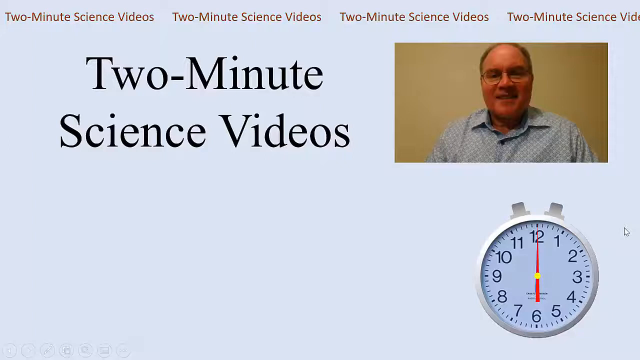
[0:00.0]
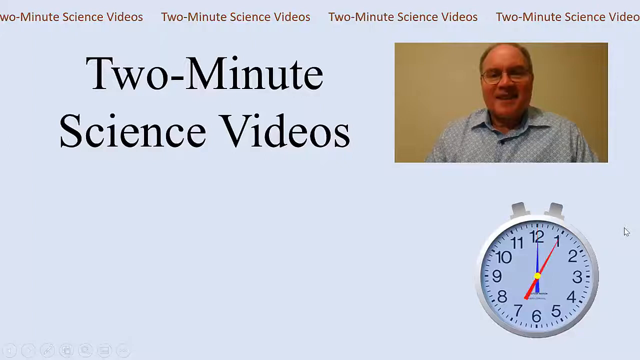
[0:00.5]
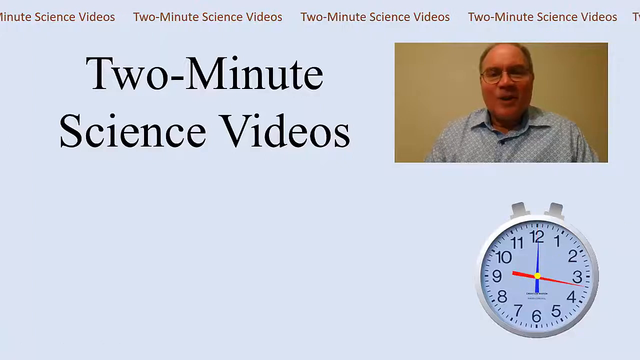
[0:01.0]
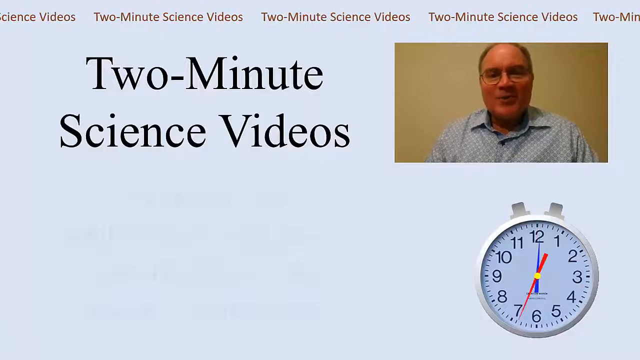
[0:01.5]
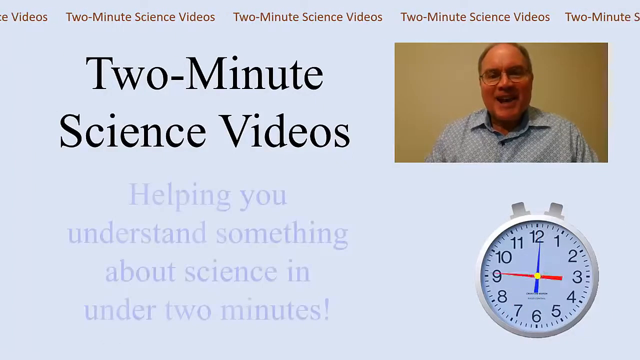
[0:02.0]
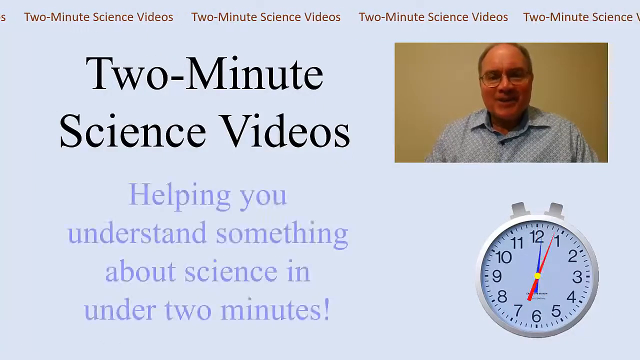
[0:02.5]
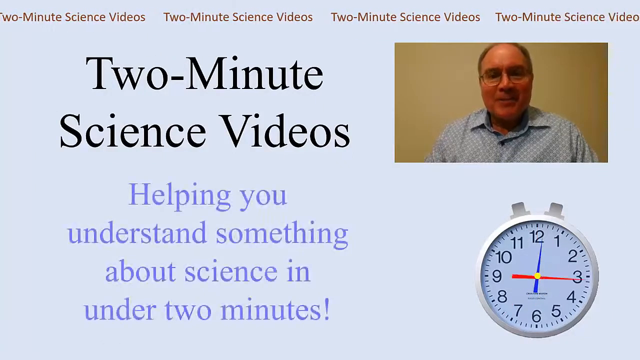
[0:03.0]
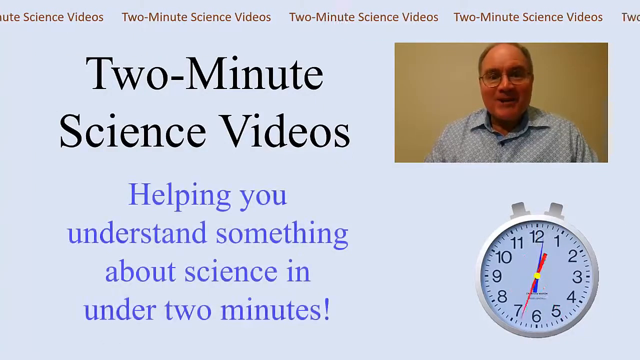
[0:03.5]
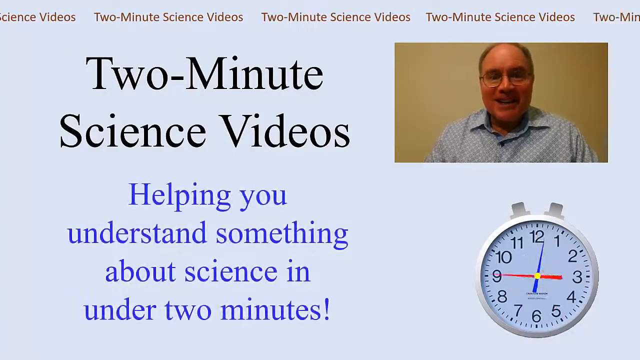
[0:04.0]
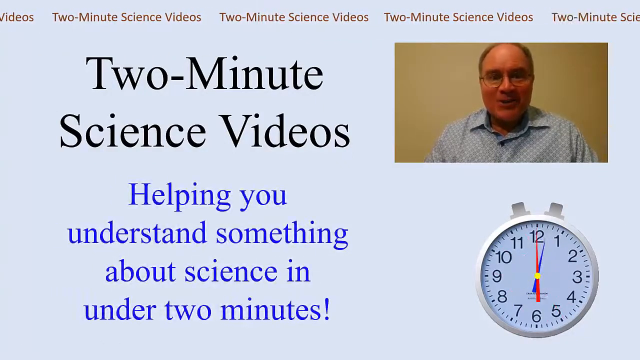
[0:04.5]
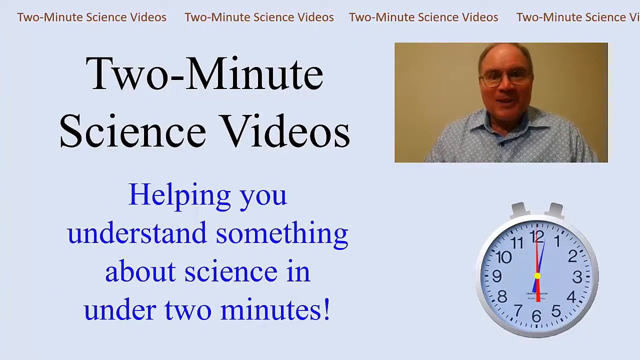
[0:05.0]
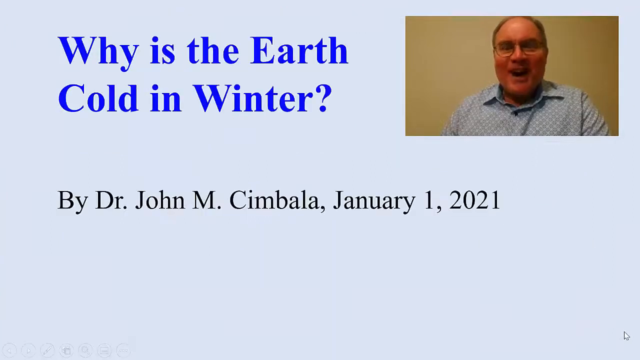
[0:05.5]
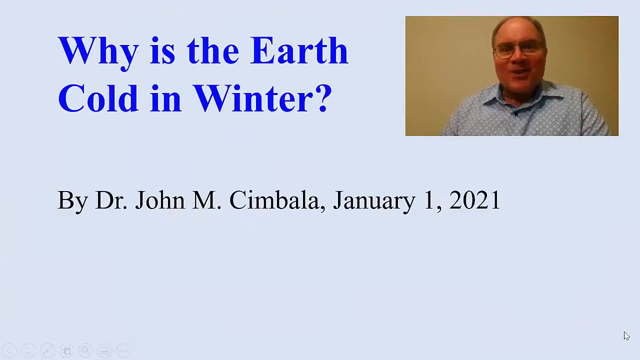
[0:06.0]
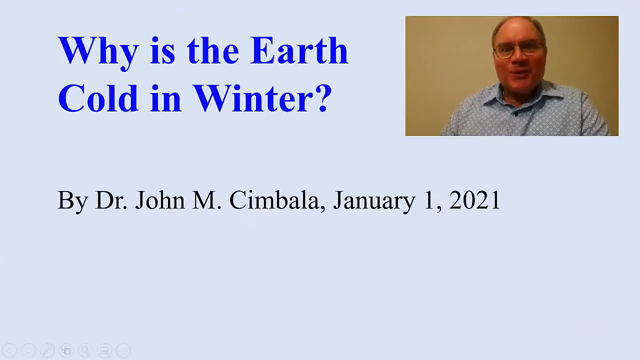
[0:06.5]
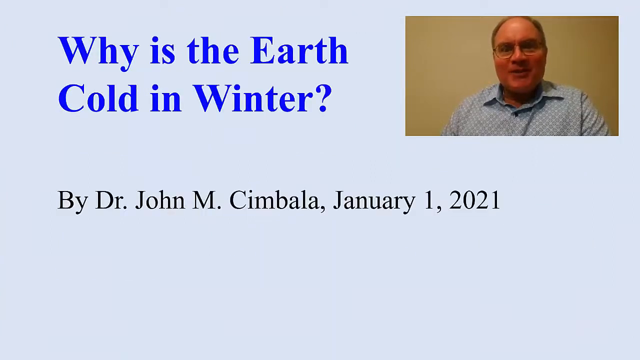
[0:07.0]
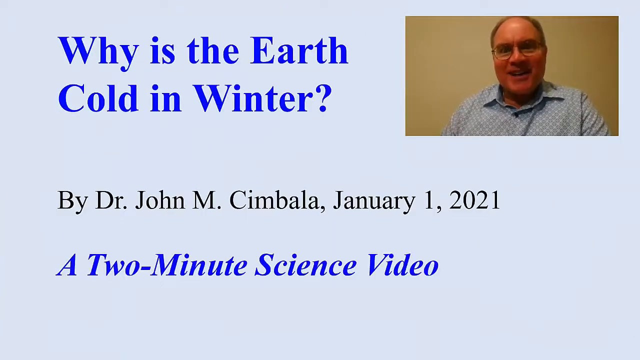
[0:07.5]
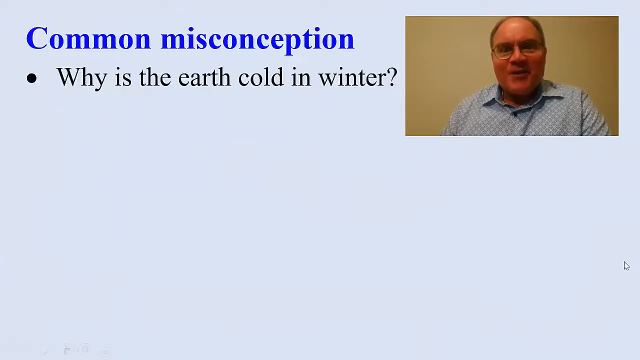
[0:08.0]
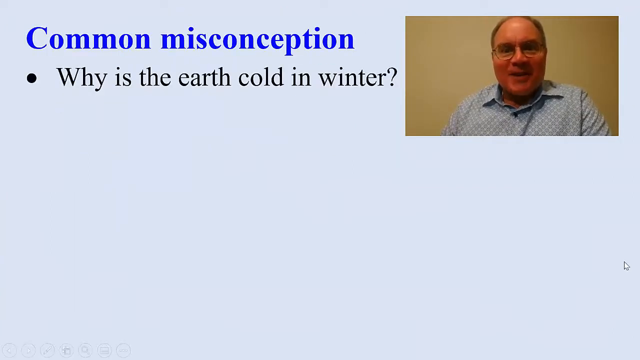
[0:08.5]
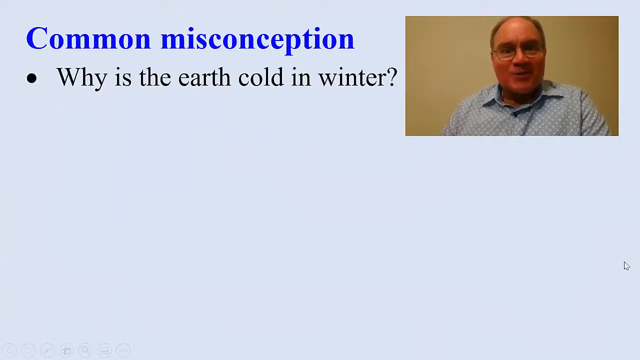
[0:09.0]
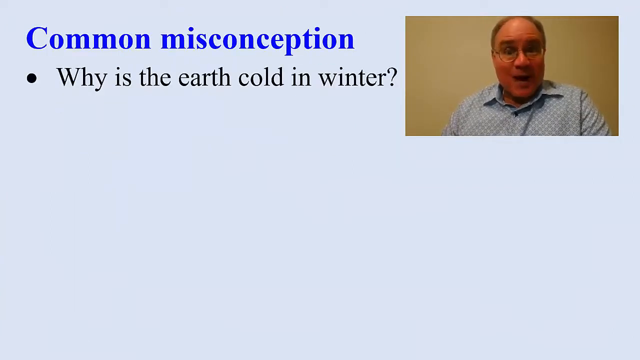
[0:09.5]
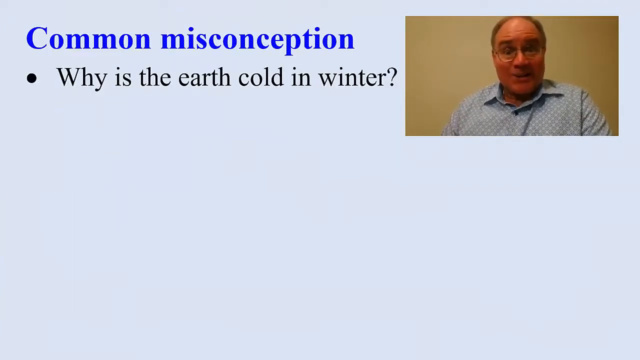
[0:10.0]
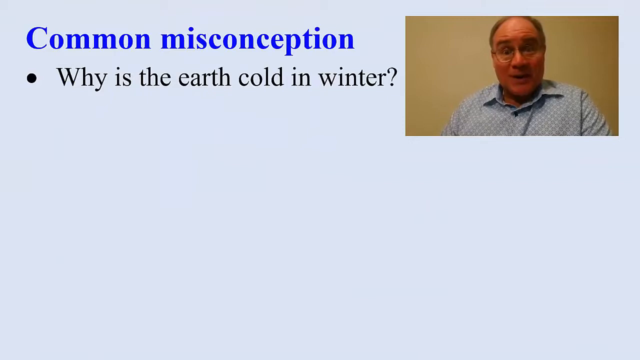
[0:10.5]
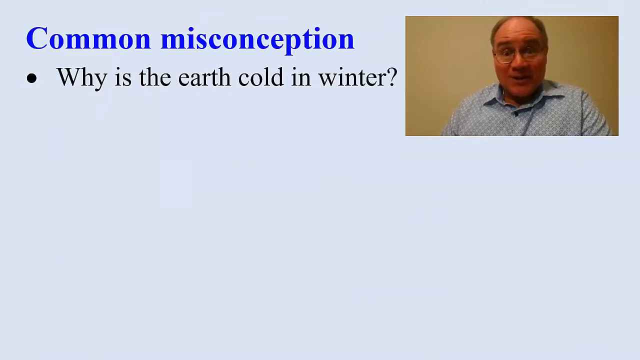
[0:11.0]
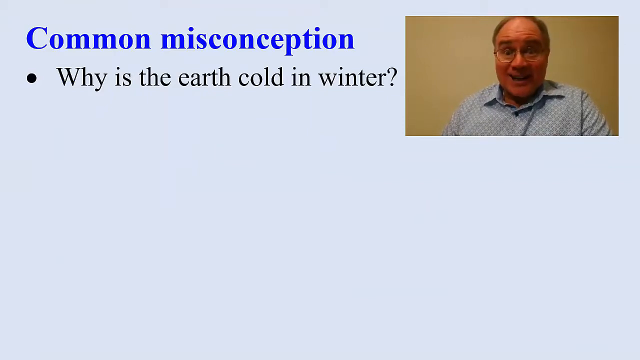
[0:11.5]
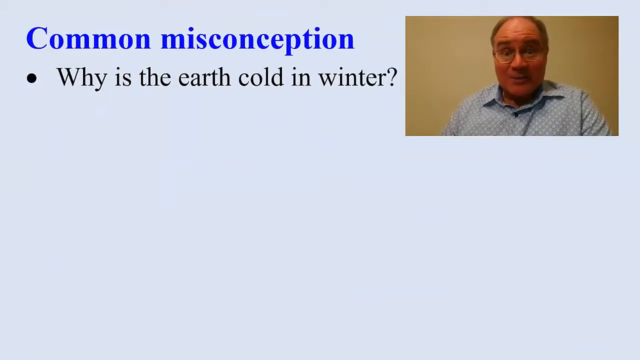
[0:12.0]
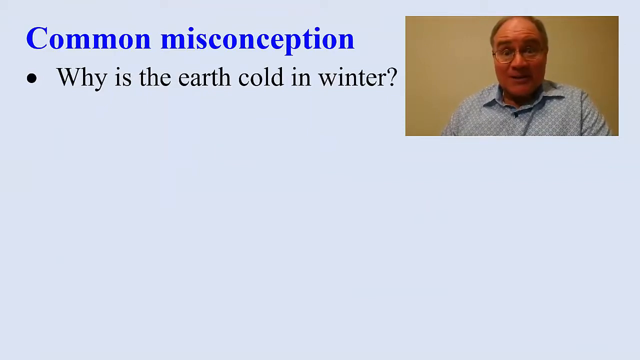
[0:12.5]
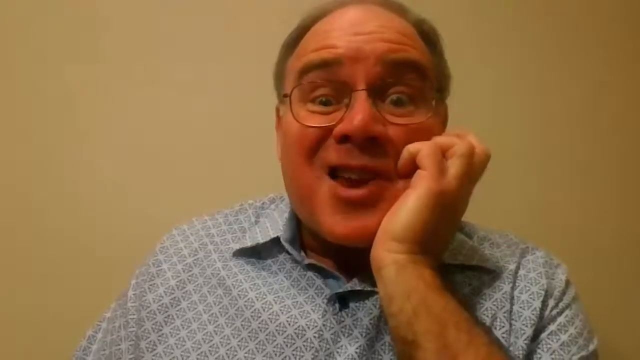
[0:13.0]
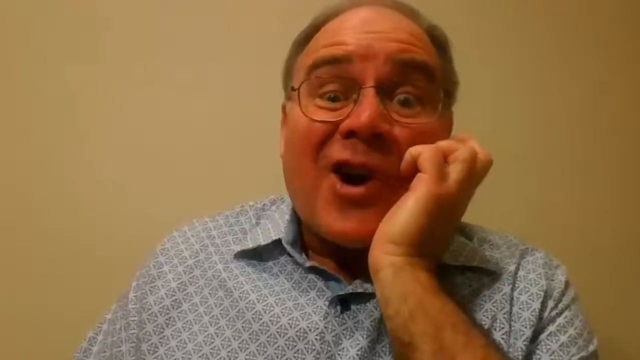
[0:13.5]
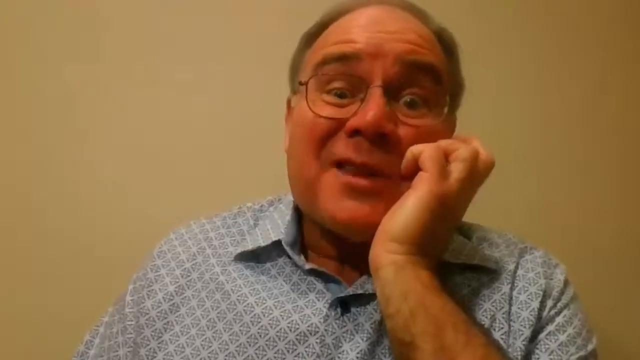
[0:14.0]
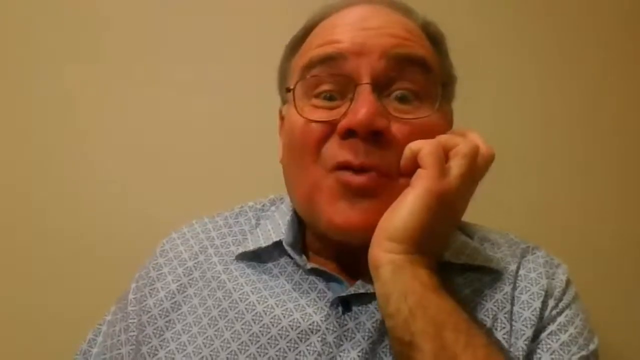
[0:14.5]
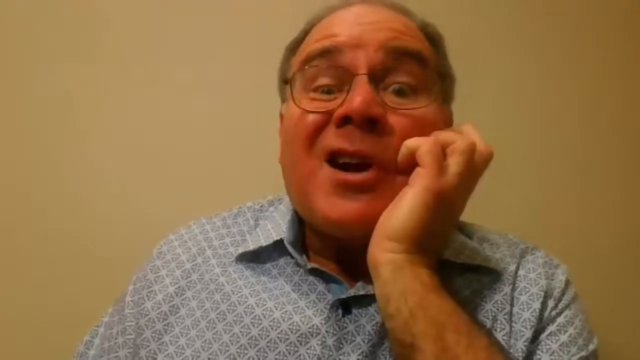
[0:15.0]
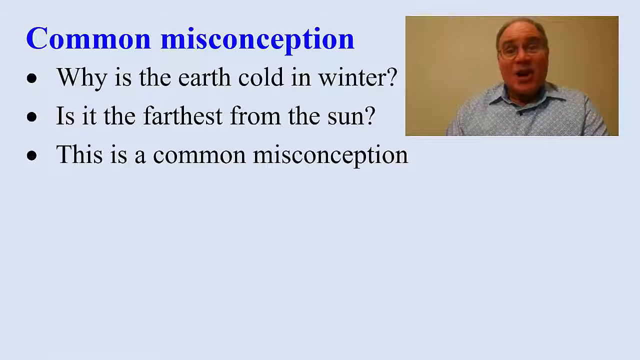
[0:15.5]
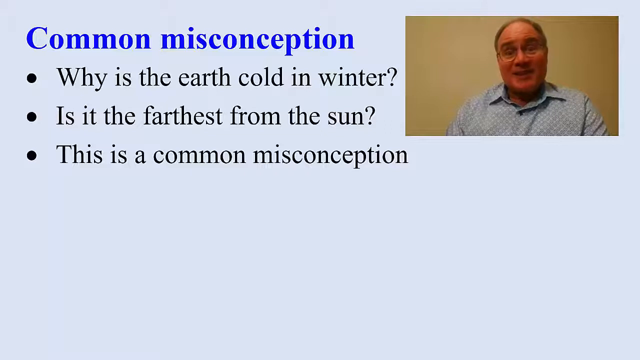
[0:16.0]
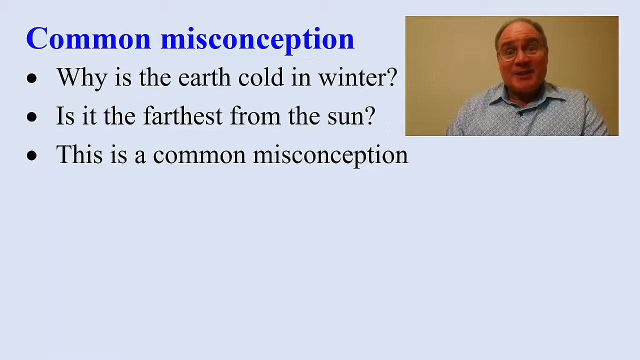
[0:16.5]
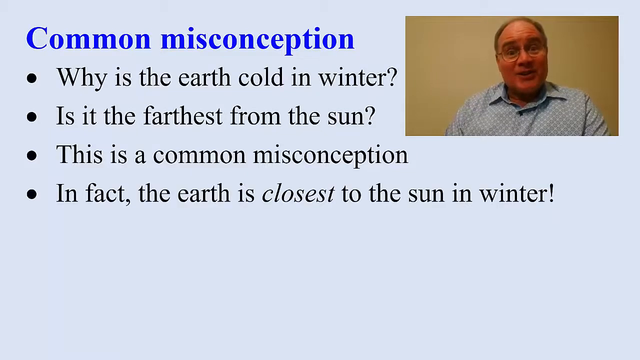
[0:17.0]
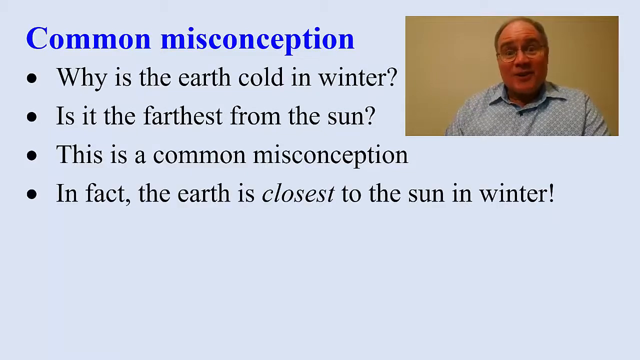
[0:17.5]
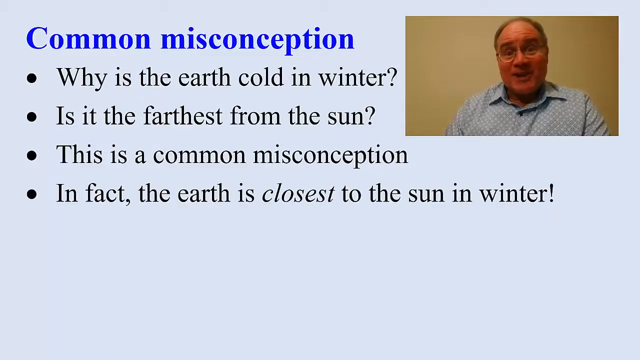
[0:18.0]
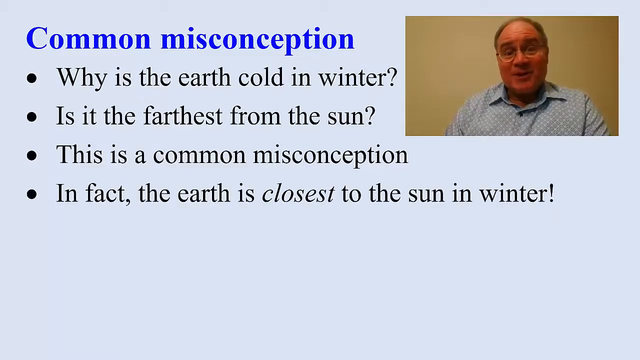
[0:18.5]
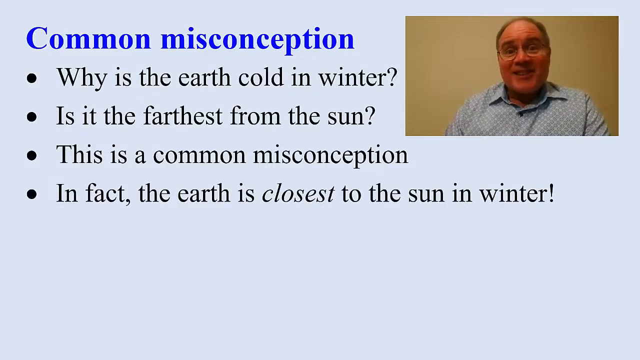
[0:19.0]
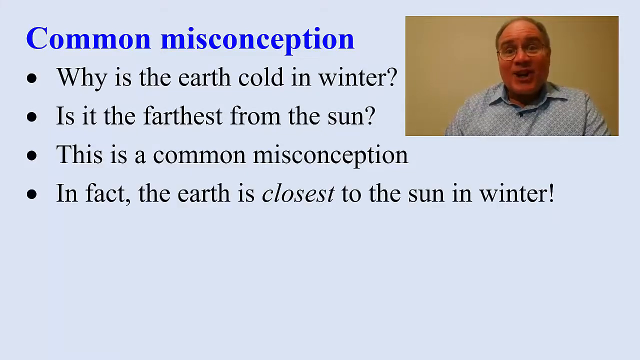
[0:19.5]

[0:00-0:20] The words "two minutes science videos" scroll in red across the very top of the screen. The words "helping you understand something about science in under two minutes" then appear. In a picture-in-picture box in the upper right corner is a man who is balding at the top and wears glasses; he smiles as he speaks and wears a collared, long-sleeve, button-down blue shirt with a white design on it. A stopwatch is in the lower right corner. Next, the text "why is the Earth cold in winter" appears, with "by Dr. John M. Cimbala, January 1st, 2021" beneath it, followed by "common misconceptions". The view then changes to a full screen of the man, who is in the middle of the screen with no one else in the frame. He looks like he is sitting in a room where only the wall behind him is visible, and appears to be sitting at a desk. His left arm is bent at the elbow with his hand up towards his face, palm facing his face, fingers drawn in, and the base of his palm under his chin, so that he is essentially leaning on his chin as he speaks.